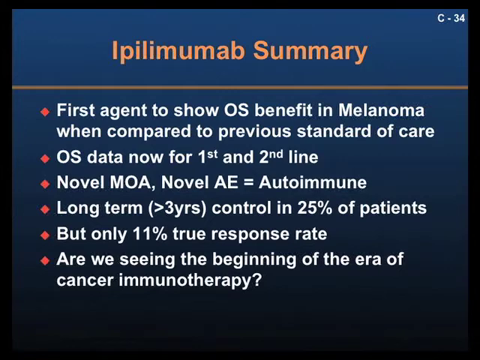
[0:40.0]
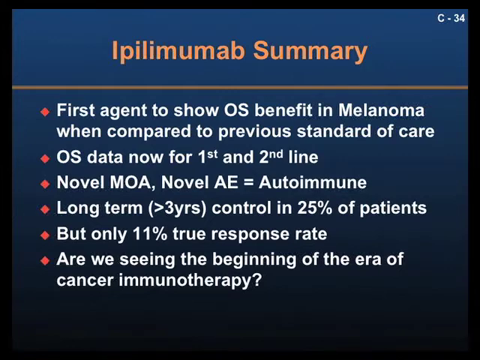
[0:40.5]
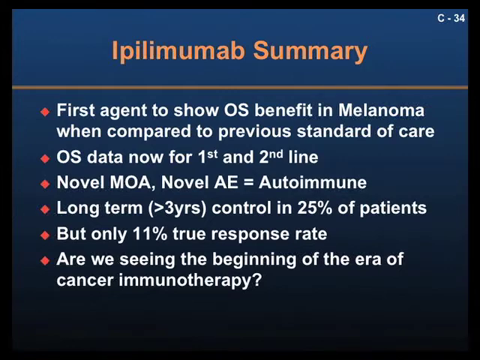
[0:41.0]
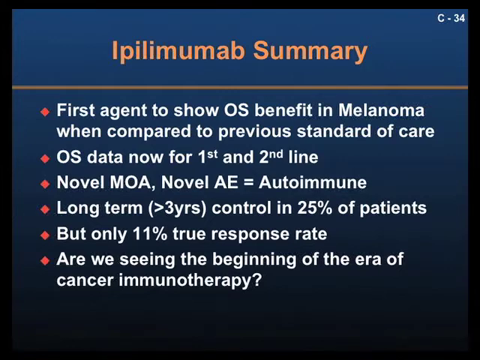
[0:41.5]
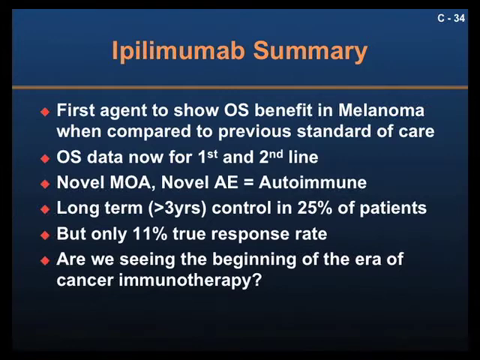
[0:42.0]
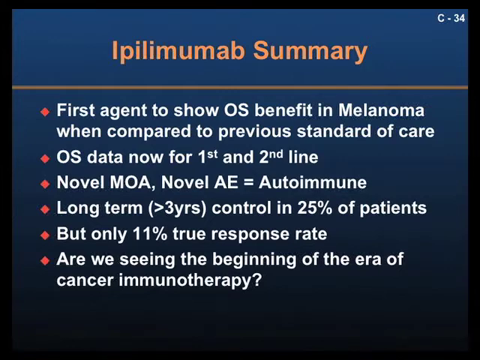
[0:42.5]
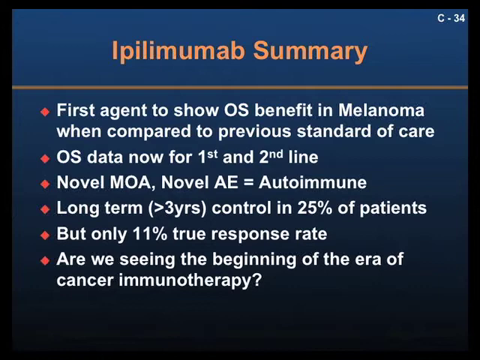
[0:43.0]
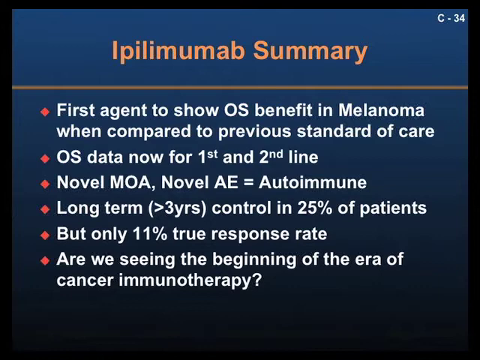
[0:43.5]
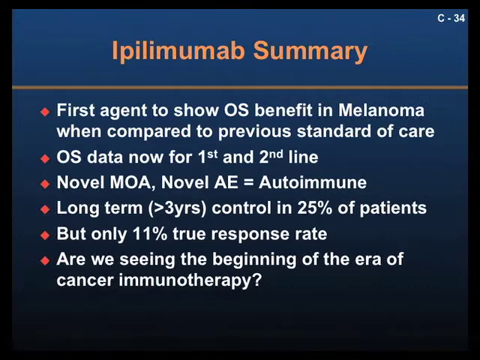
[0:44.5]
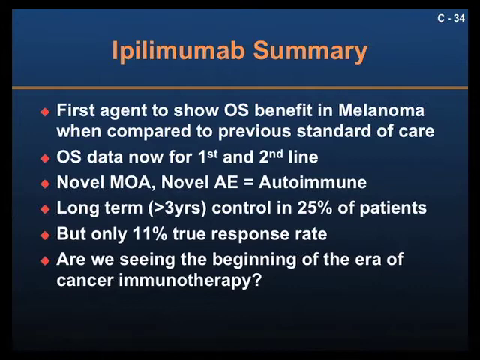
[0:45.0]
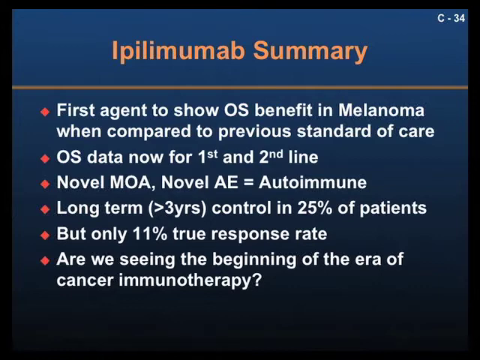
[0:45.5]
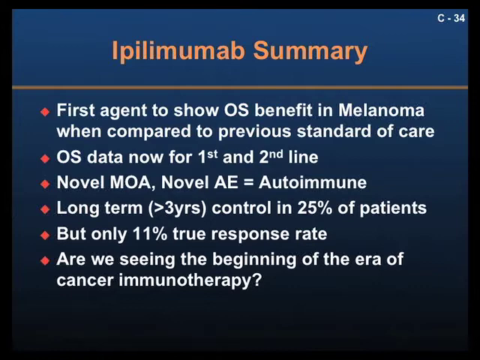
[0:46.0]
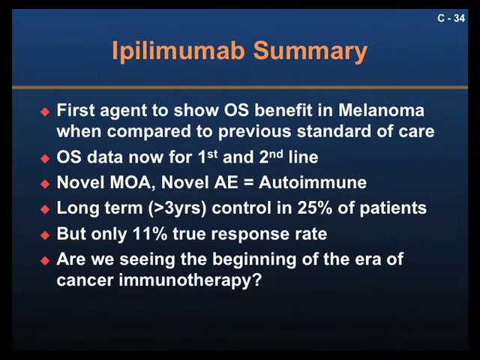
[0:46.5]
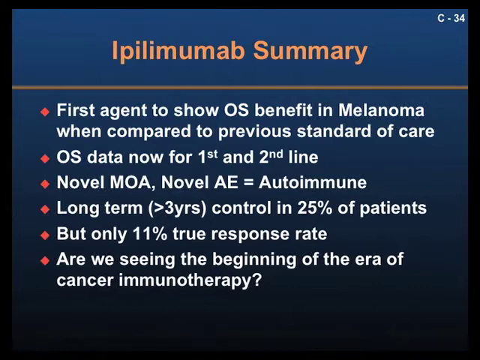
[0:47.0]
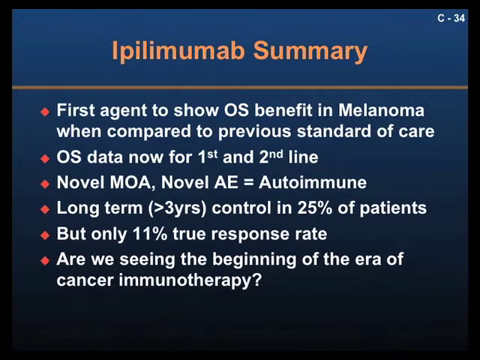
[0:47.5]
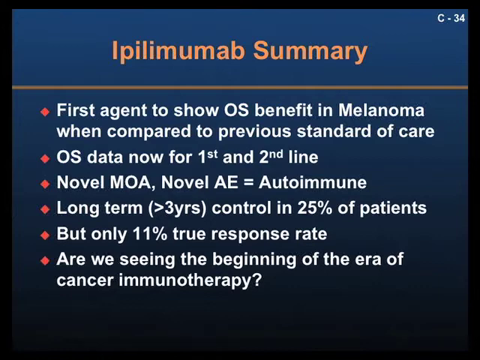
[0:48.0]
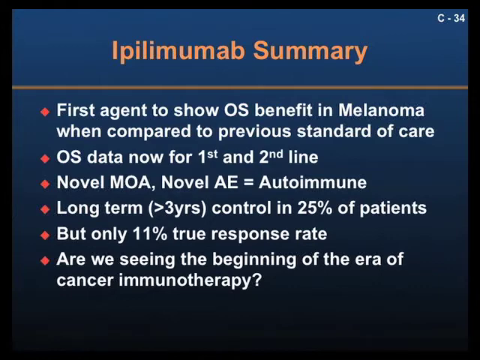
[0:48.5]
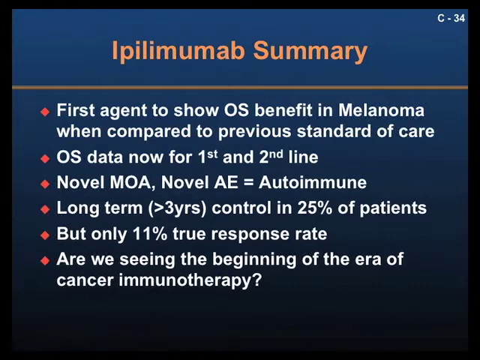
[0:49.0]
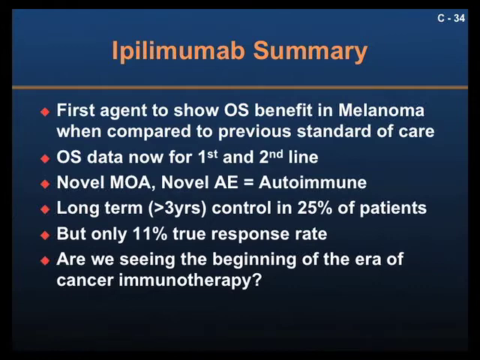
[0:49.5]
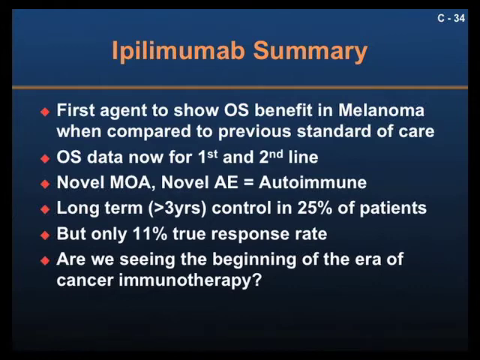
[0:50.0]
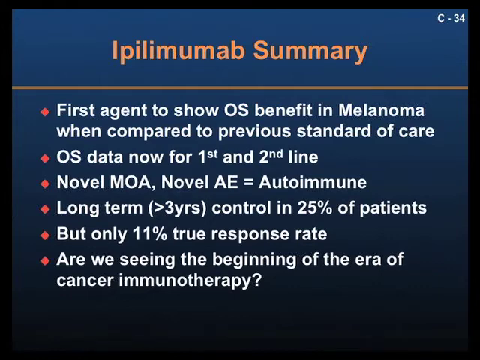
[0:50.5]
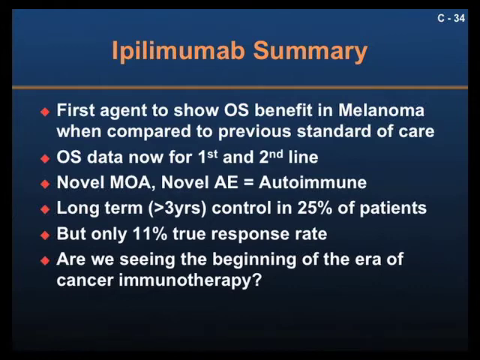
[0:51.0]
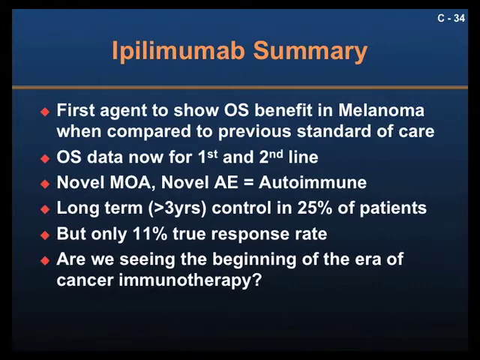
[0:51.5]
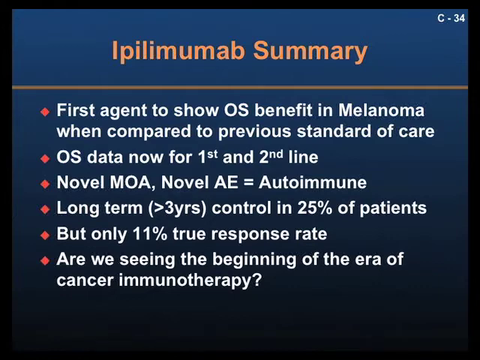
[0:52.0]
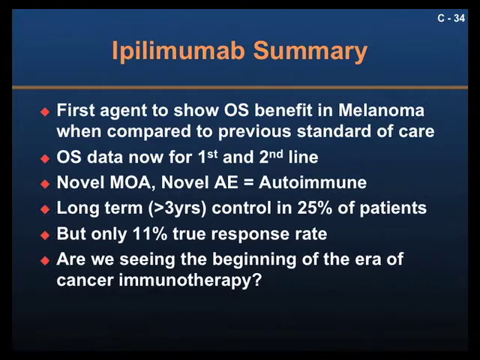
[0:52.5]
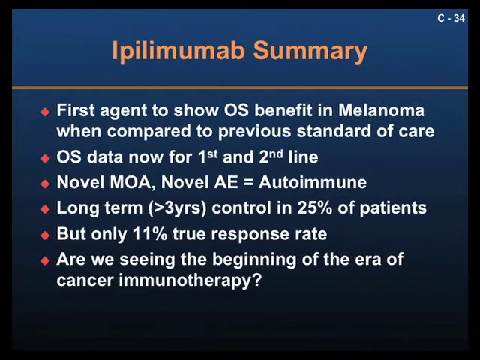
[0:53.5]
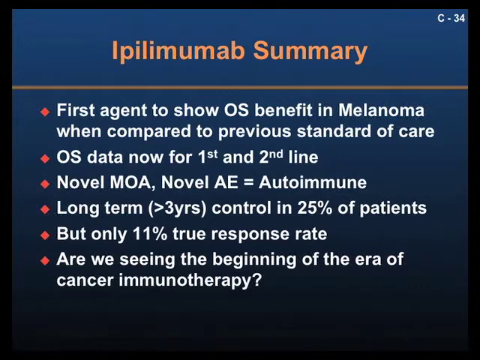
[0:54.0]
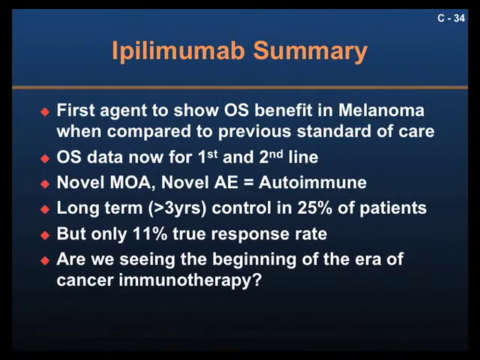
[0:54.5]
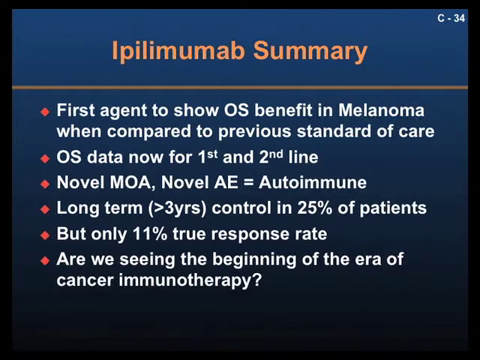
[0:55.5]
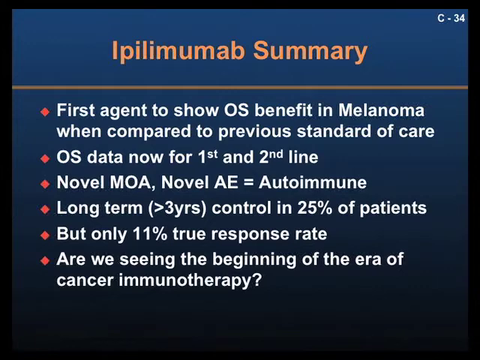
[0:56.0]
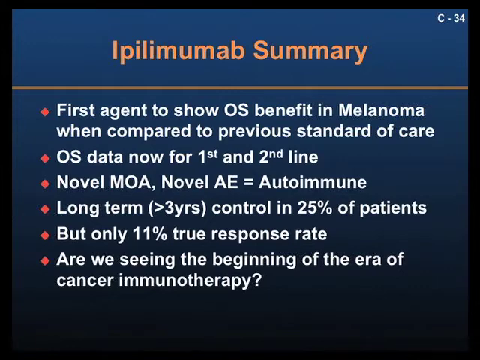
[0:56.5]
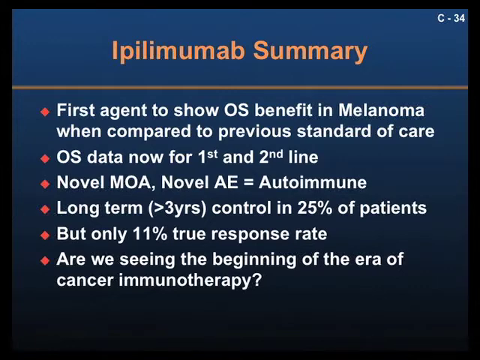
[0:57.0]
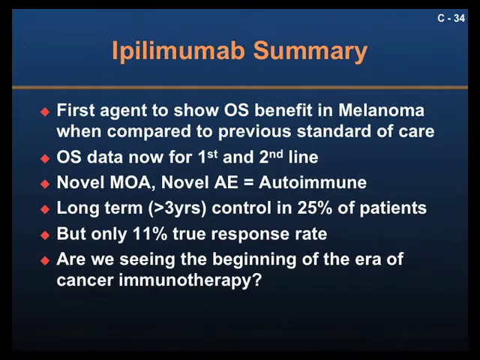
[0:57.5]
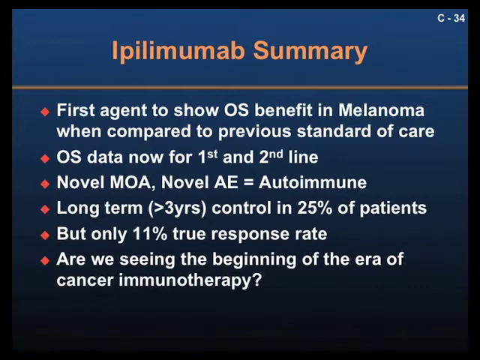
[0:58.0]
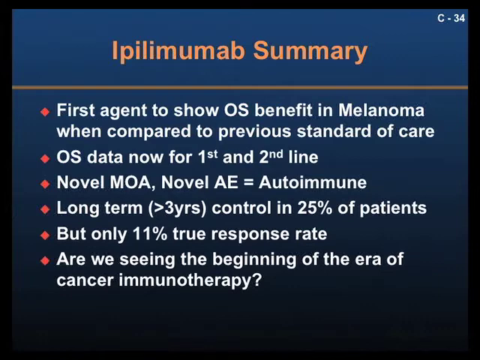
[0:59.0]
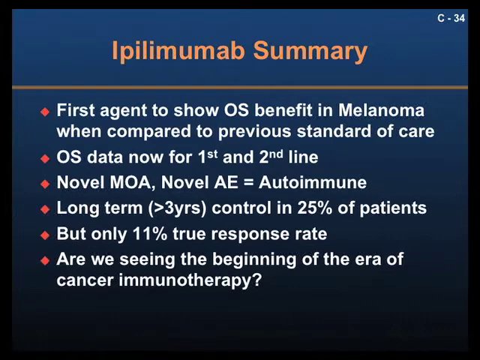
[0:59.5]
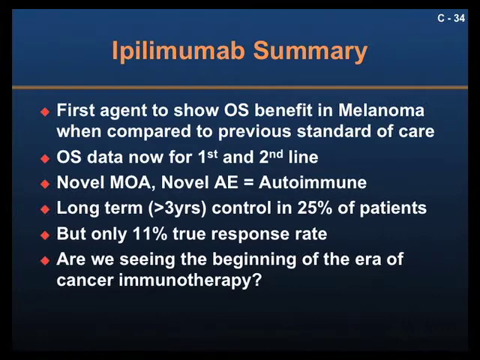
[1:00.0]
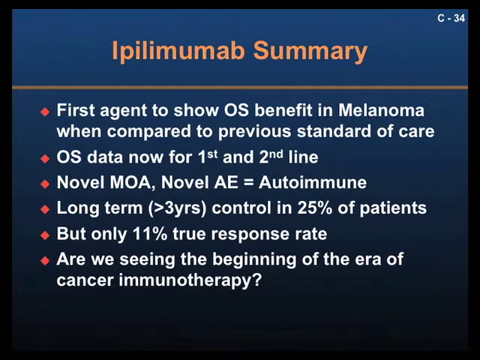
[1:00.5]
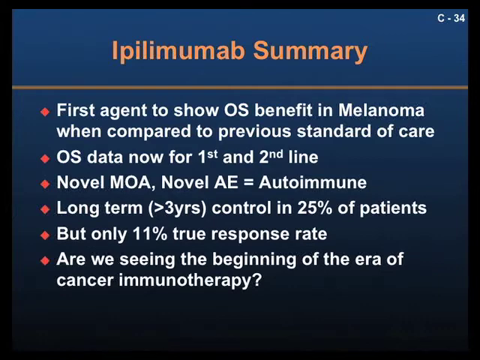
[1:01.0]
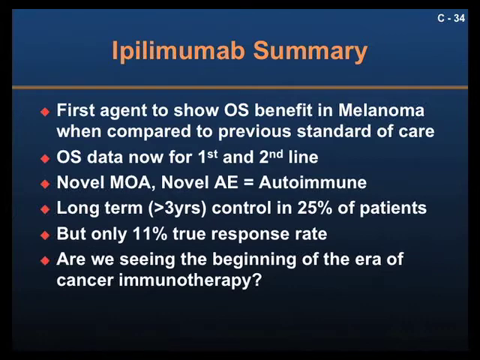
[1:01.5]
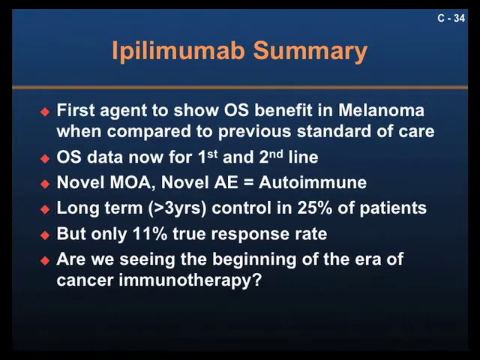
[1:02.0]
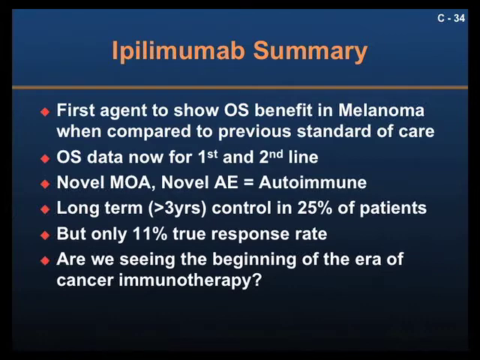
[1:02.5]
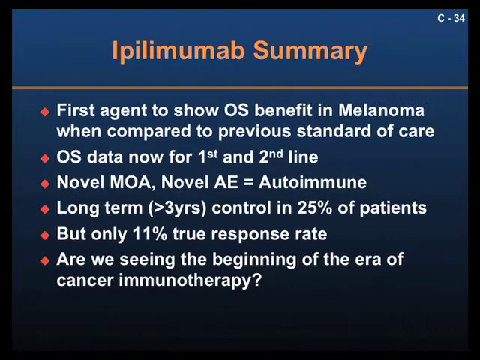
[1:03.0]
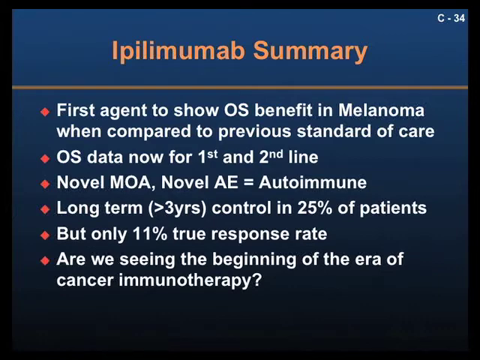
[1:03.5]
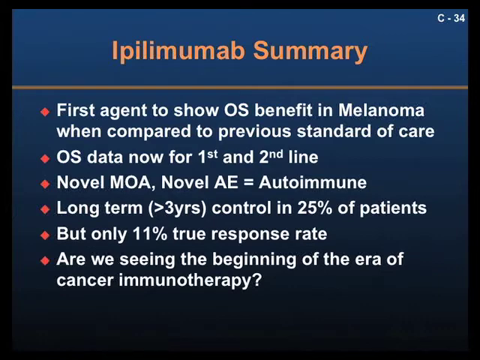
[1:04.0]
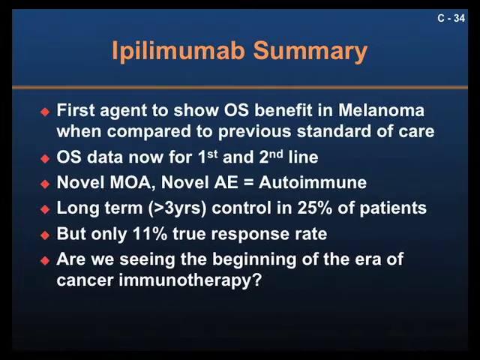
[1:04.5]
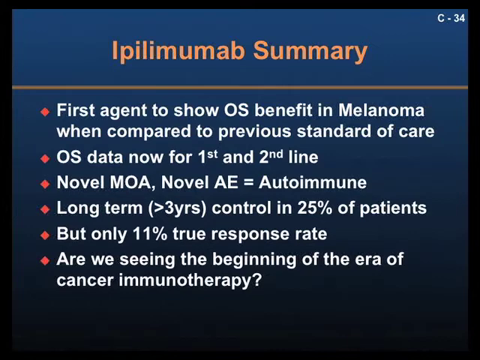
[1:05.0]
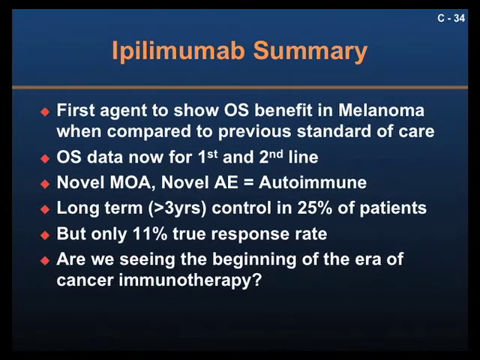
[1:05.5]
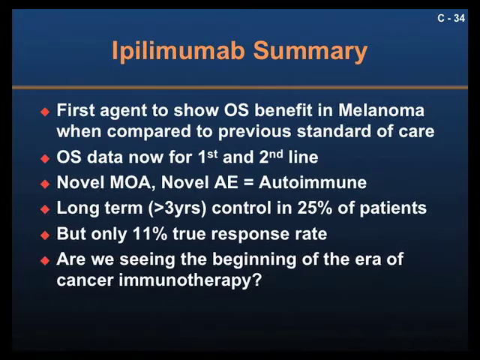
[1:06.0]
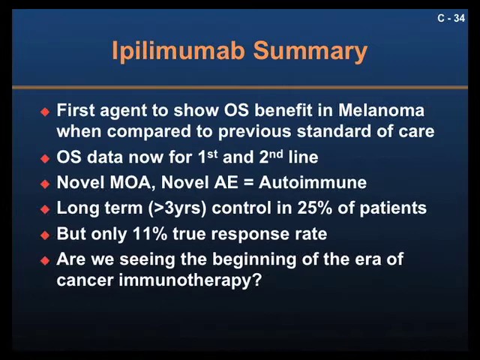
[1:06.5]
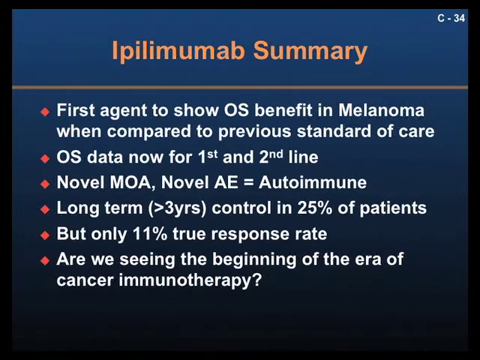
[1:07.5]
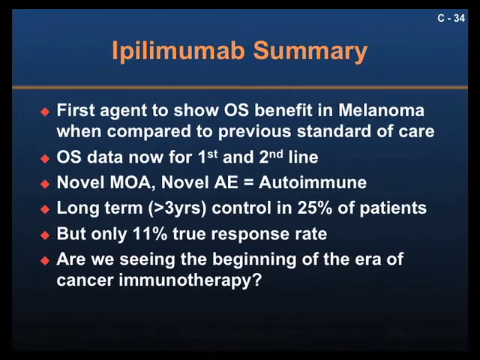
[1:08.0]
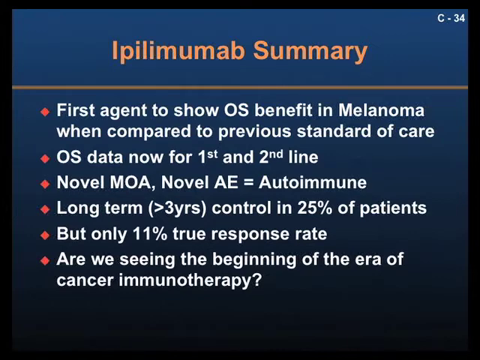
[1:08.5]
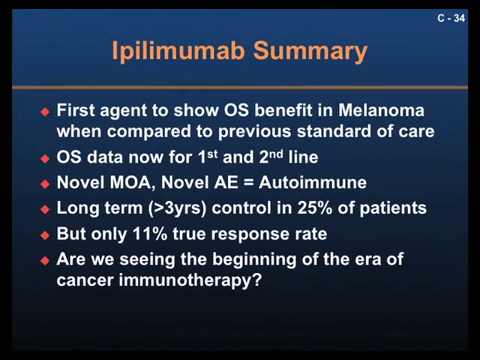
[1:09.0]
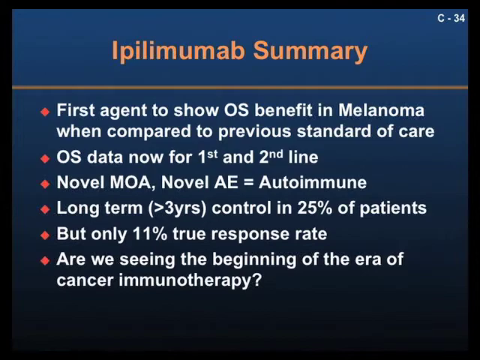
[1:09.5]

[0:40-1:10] A static screen shows a photograph of the slide the doctor is speaking about. It has text on a dark blue background, with the heading "Ipilimumab summary" in orange, underlined with an orange line. Below, points marked by red diamond bullets on the left-hand side read: "first agent to show OS benefit in melanoma when compared to previous standard of care. OS data now for first and second line."; "novel MOA, novel AE equals to autoimmune."; "long term (greater than three years control in 25% of patients)"; "but only 11% true response rate."; and "are we seeing the beginning of the era of cancer immunotherapy?"